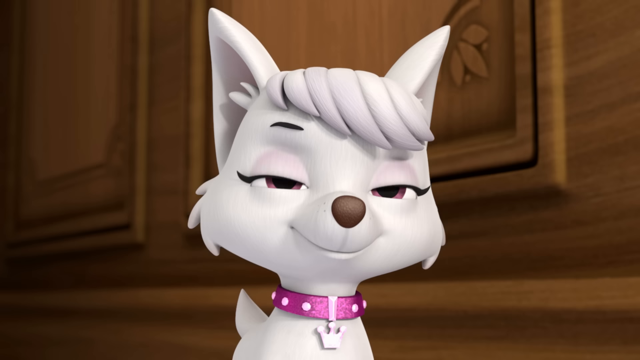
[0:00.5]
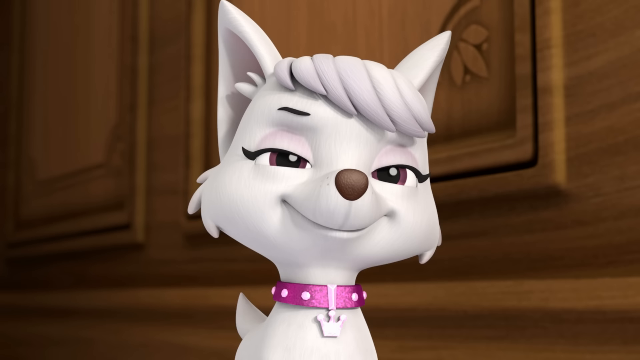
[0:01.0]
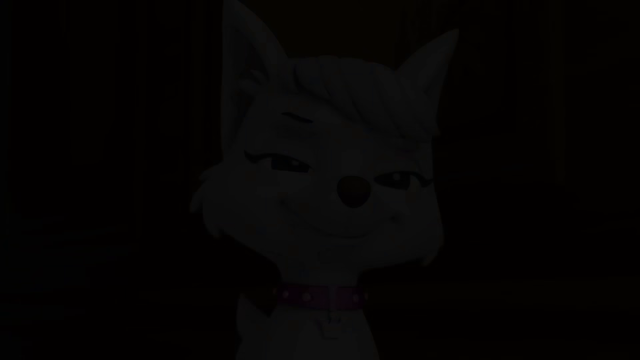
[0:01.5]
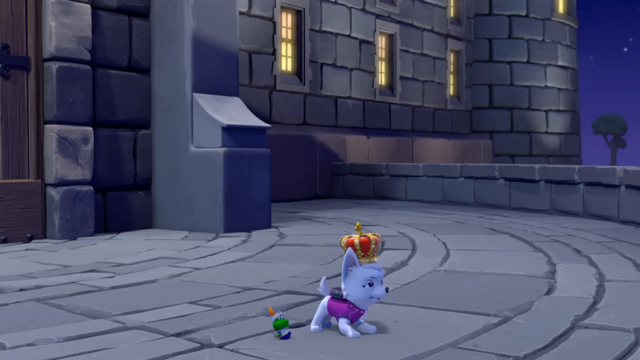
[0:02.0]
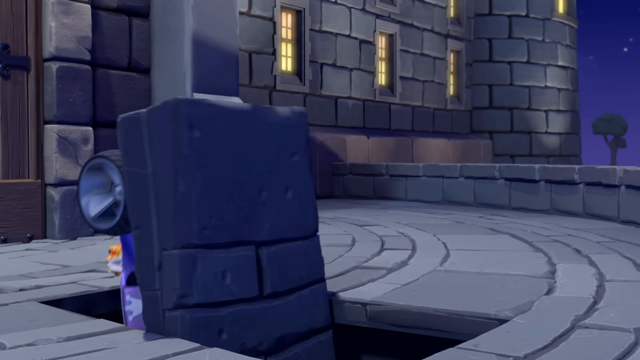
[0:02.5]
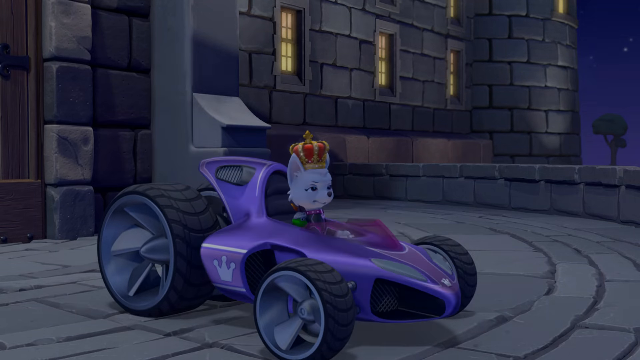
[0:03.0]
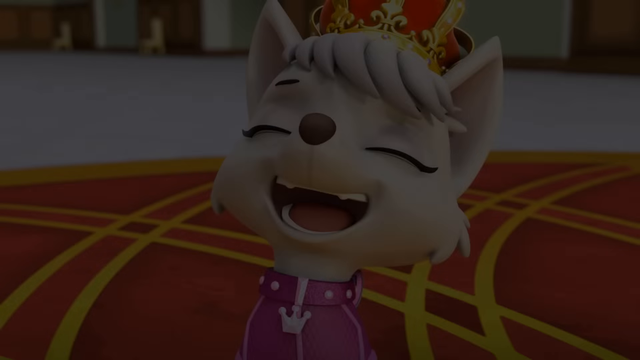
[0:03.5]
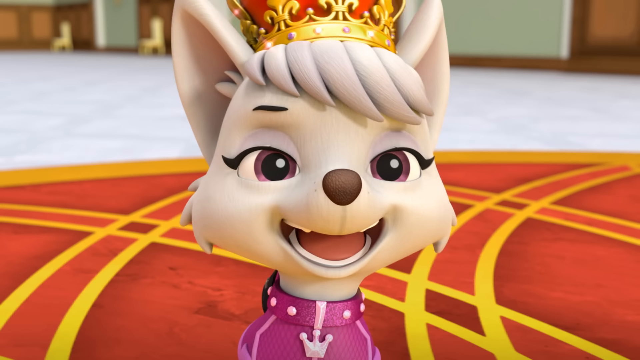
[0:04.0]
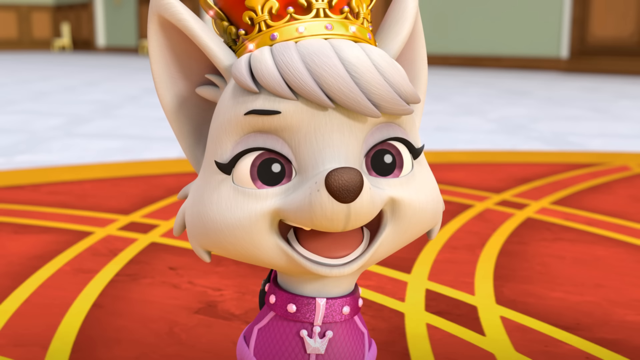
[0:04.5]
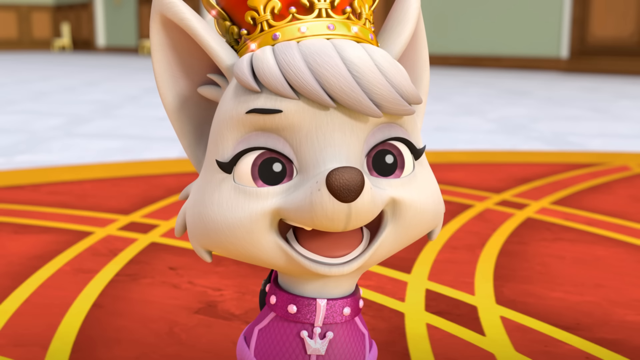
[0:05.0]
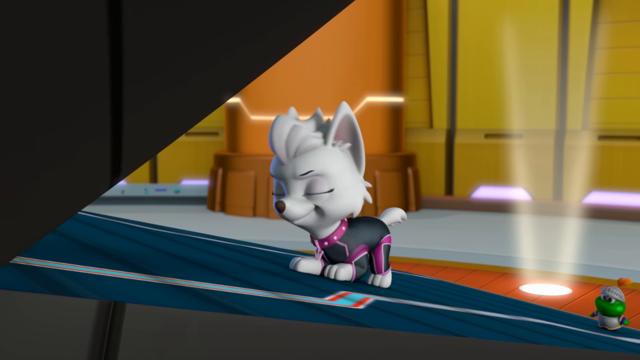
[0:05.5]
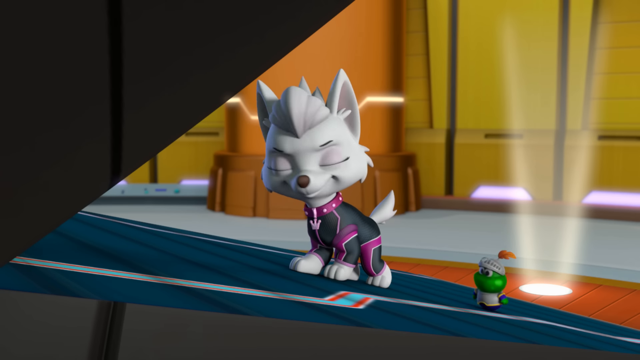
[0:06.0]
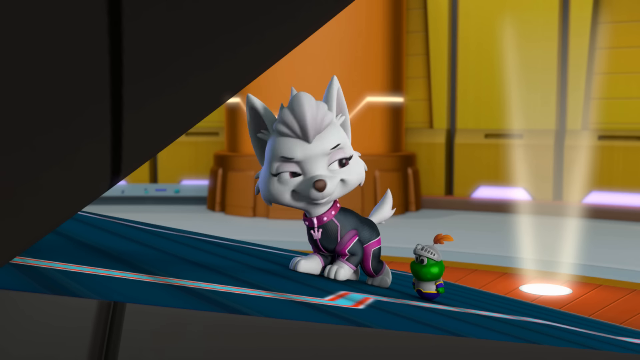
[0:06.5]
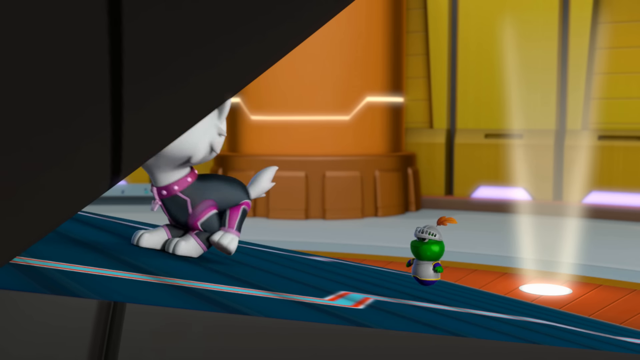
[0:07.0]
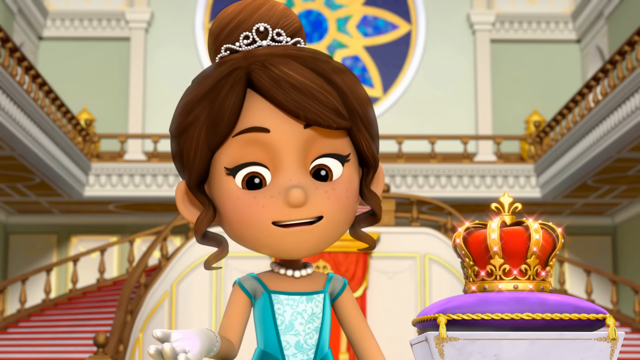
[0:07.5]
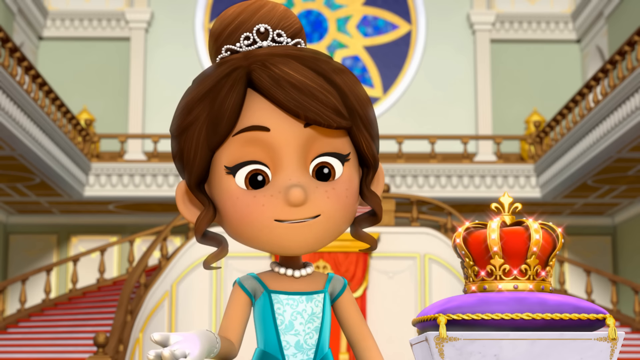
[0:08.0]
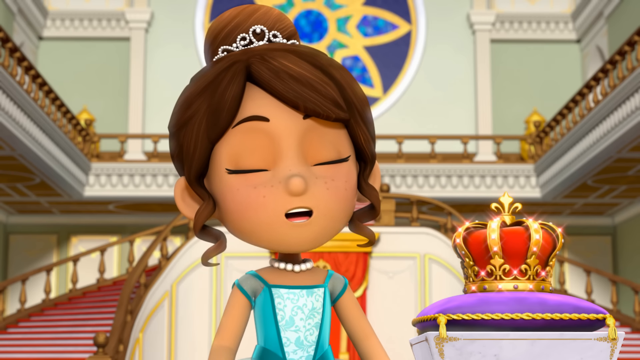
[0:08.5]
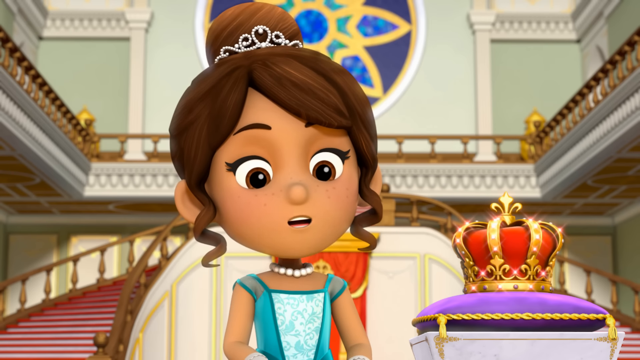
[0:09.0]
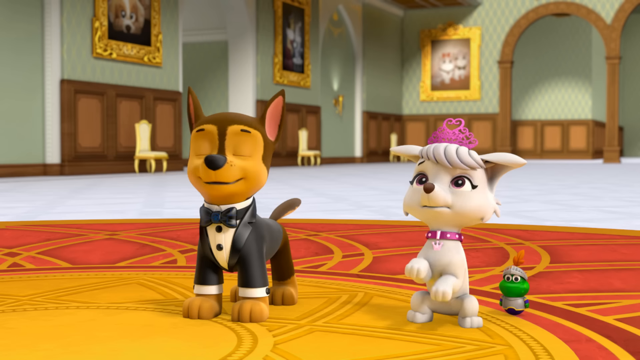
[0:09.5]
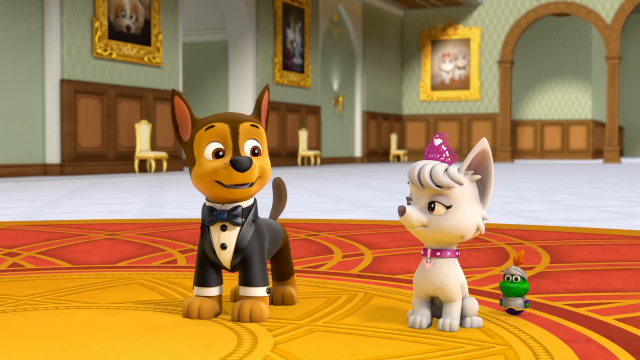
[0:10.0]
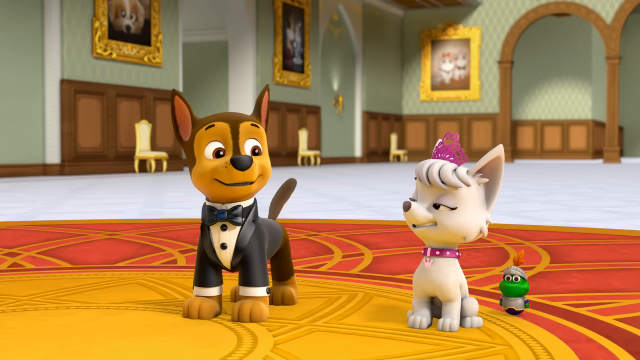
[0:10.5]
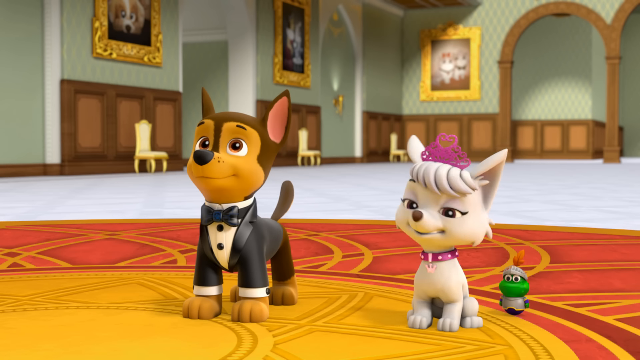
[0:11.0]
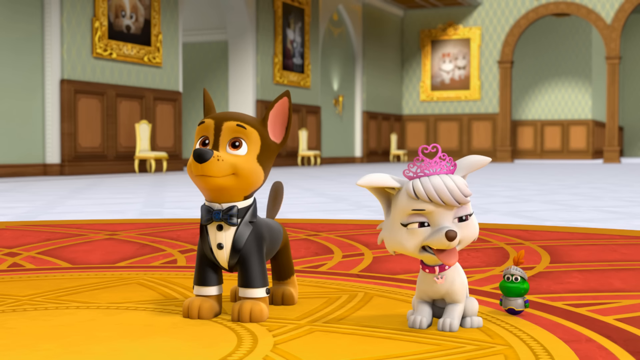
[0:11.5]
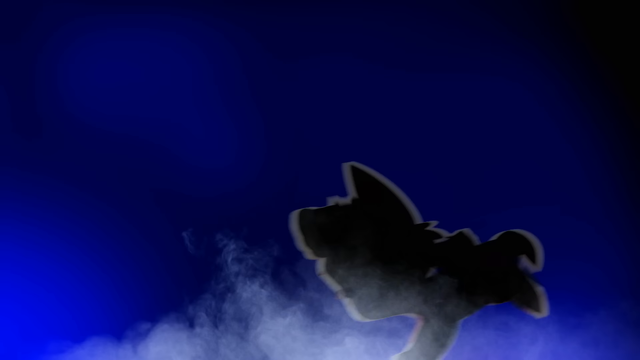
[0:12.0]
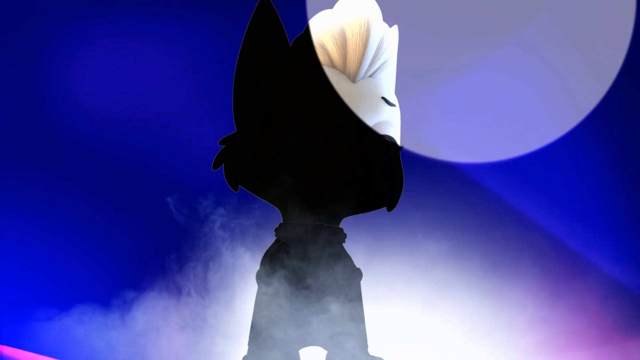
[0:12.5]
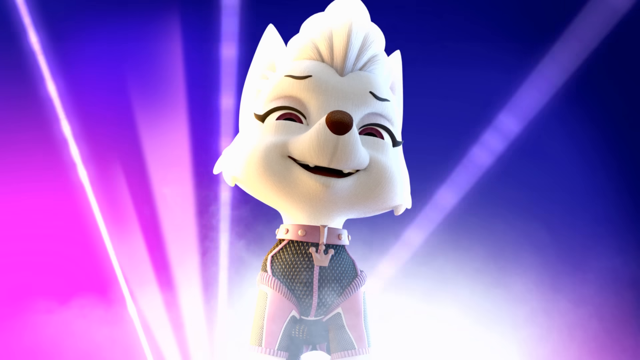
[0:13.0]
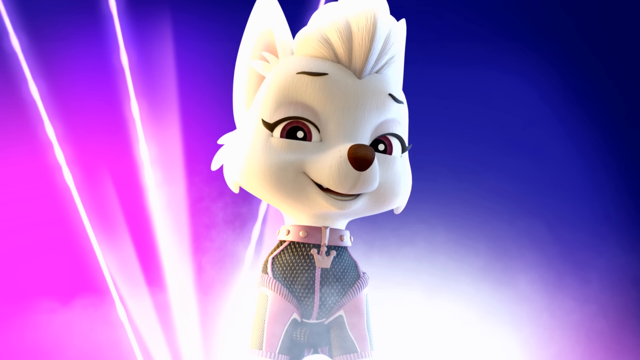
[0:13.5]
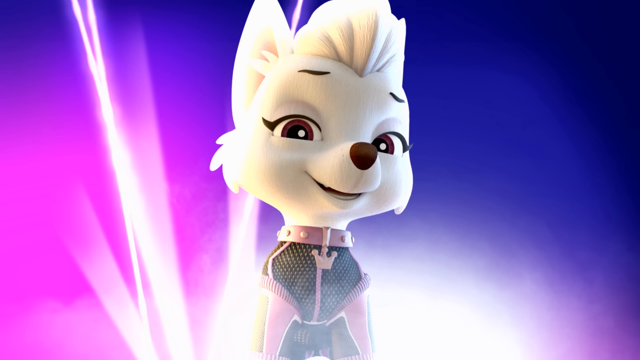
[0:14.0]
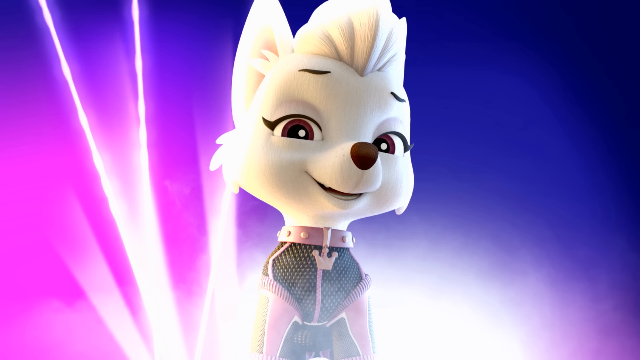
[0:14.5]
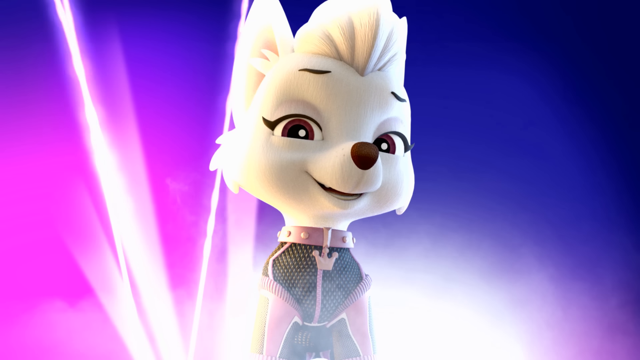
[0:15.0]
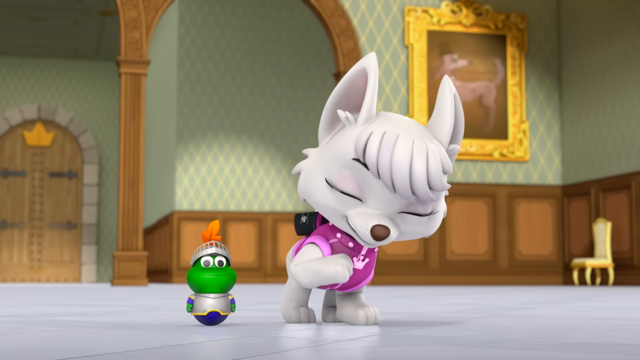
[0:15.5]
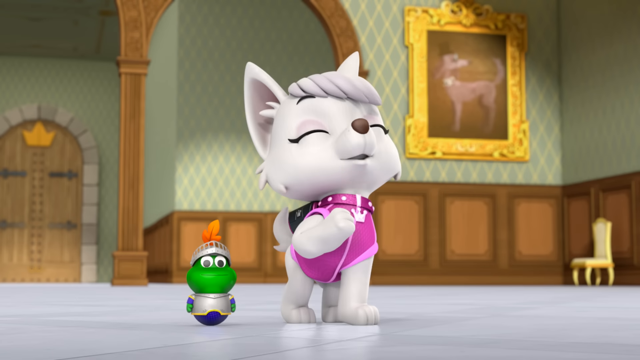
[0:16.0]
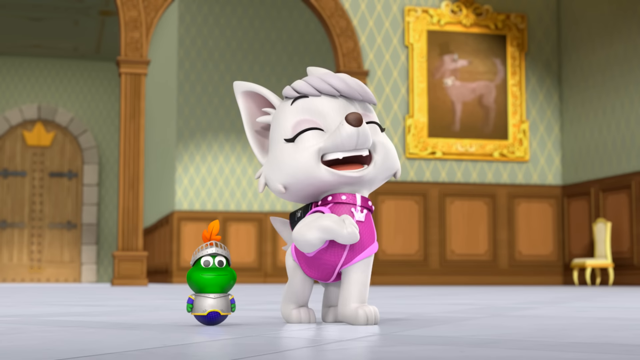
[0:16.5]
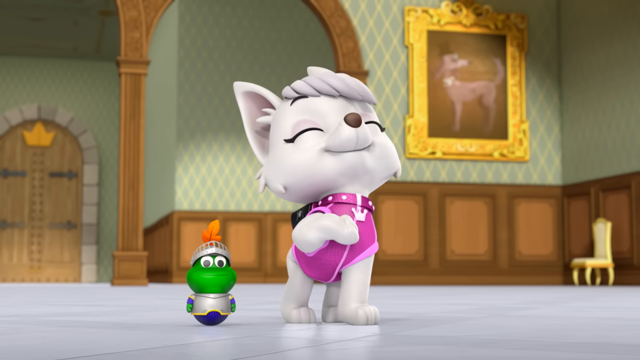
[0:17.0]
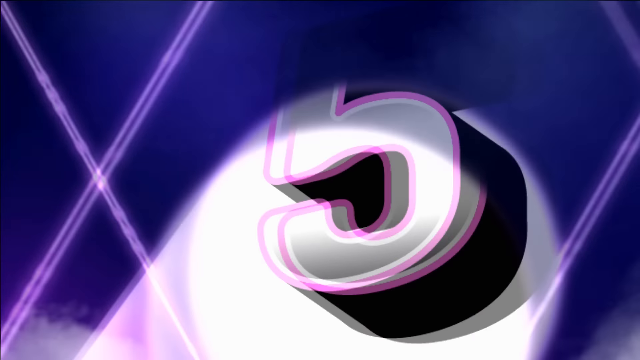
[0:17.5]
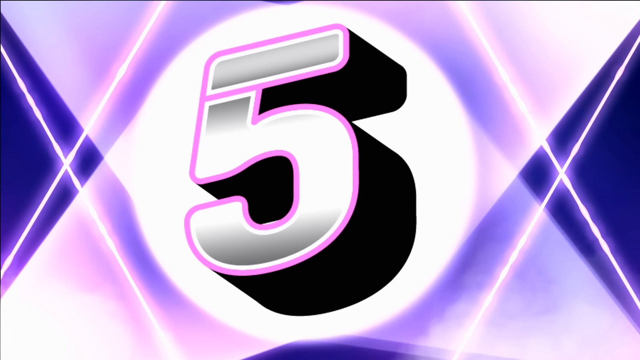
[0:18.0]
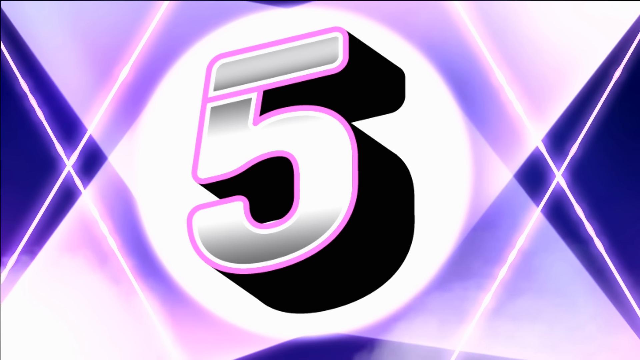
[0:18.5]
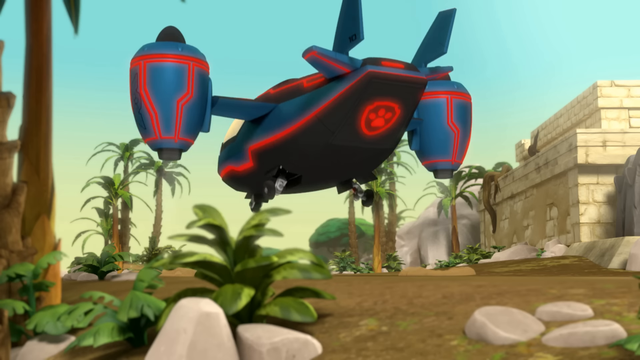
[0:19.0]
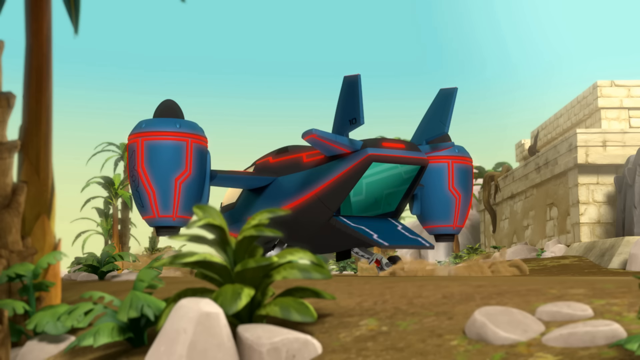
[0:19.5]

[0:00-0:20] A small white dog with a quiff of hair and small white ears appears. She is seen with a small green creature wearing a suit of armour, and also with a brown dog in a dinner jacket. She wears a small pale pink crown and a pink collar, with a small crown hanging from the front of the collar. She has brown eyes and a brown nose and is smiling. She is silhouetted, illuminated from behind against an ombre purple background, with shards of white light coming up on the left-hand side and radiating out beside her. She is then seen with the small green creature, which is a bit frog-like, has two bulbous eyes and is about a quarter of the size of the dog. The creature is in a suit of armour with a small orange feather- or leaf-like object sticking out of the top; it has no legs, just a round bottom. The dog points to herself with her paw, closes her eyes and looks up to the sky. She is then seen coming out of what looks like a blue spaceship.